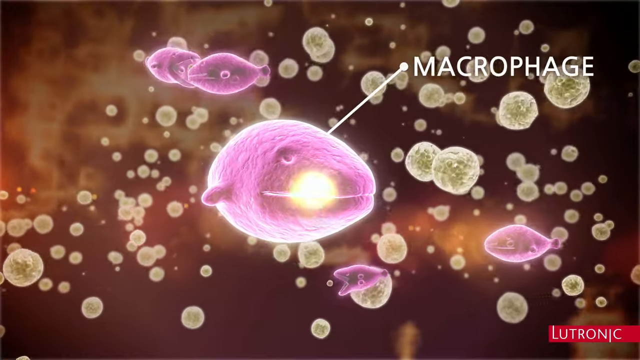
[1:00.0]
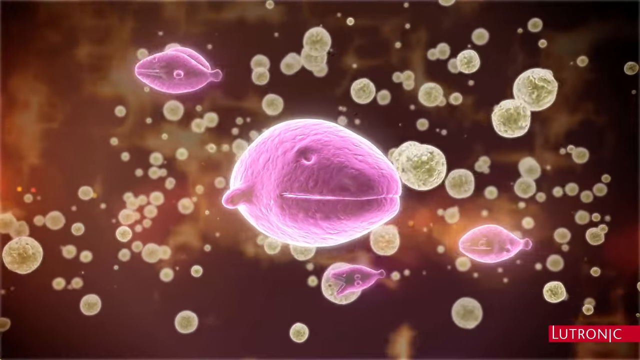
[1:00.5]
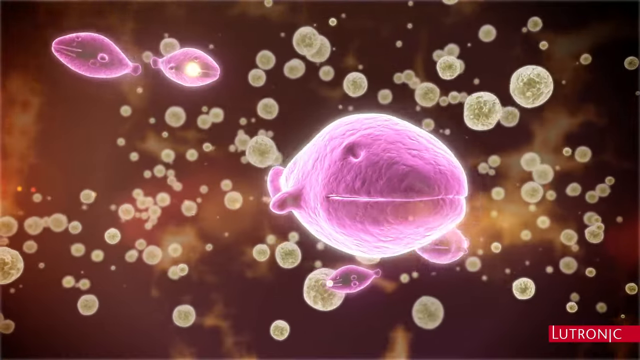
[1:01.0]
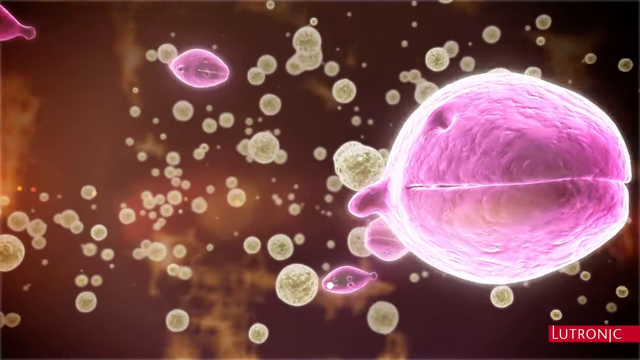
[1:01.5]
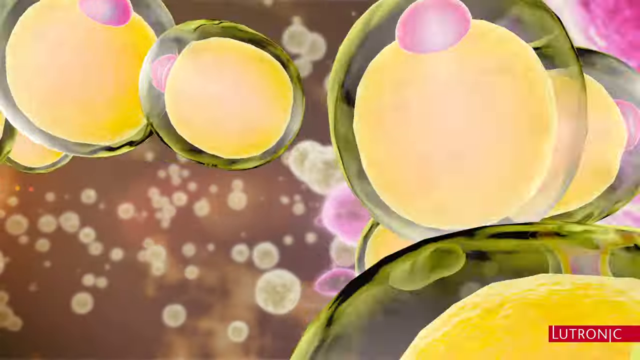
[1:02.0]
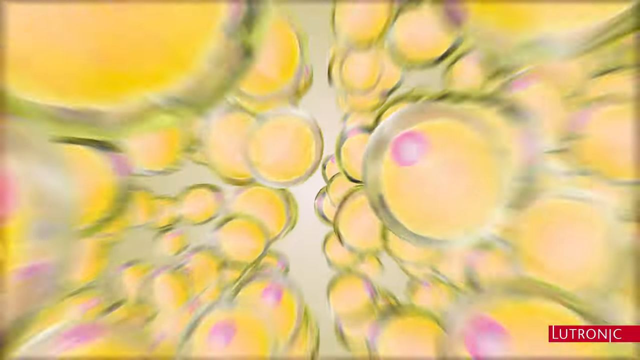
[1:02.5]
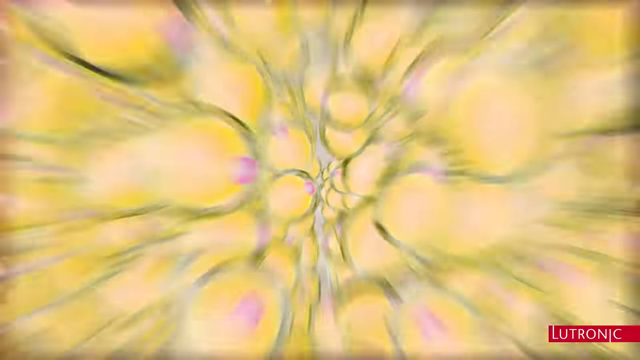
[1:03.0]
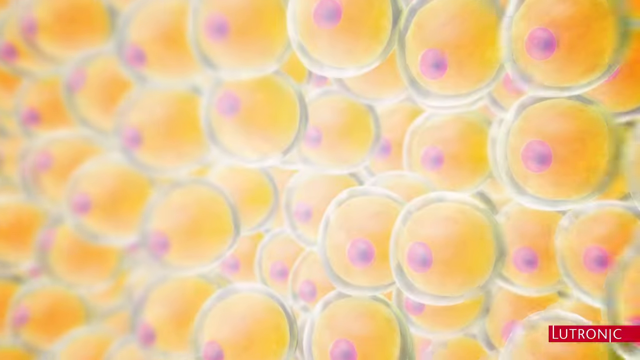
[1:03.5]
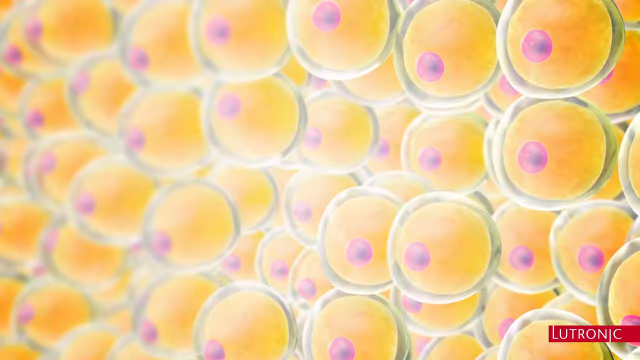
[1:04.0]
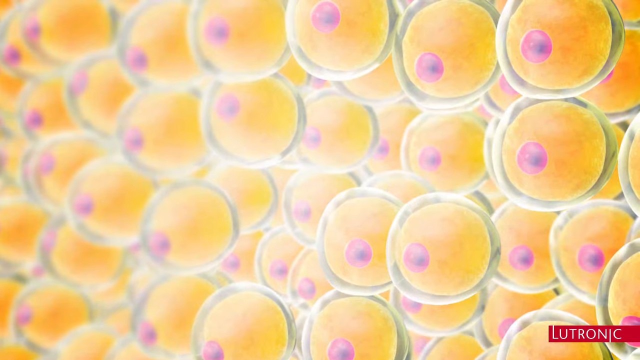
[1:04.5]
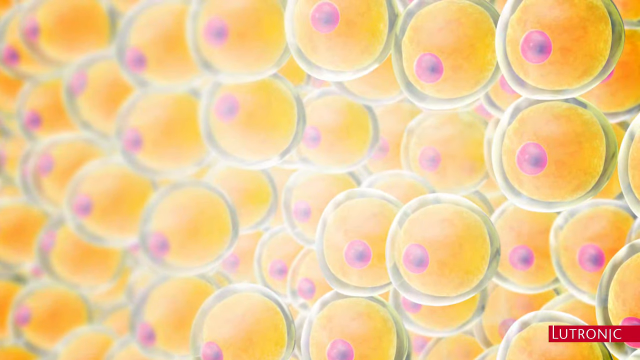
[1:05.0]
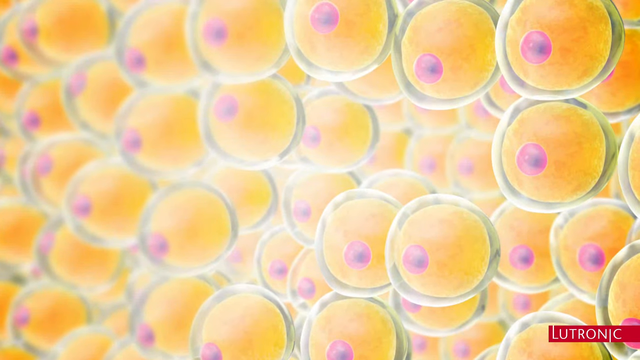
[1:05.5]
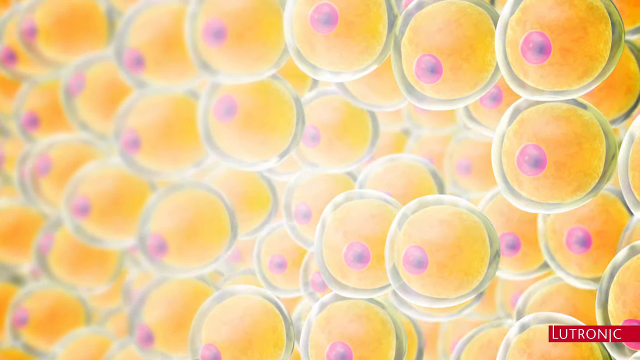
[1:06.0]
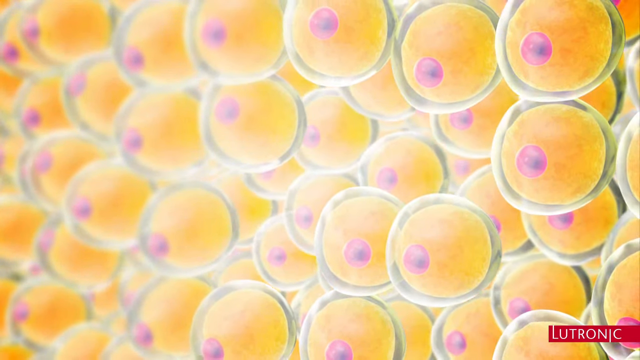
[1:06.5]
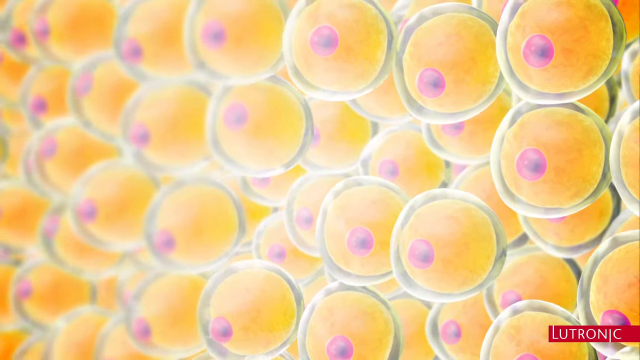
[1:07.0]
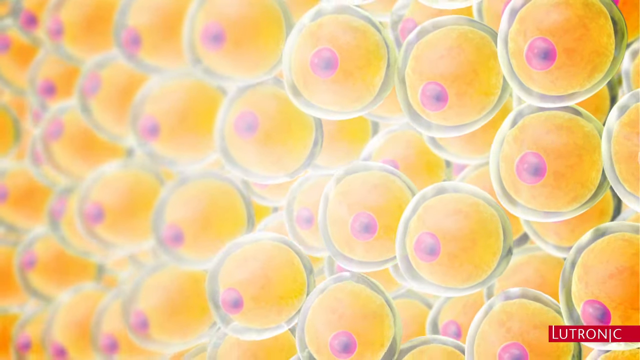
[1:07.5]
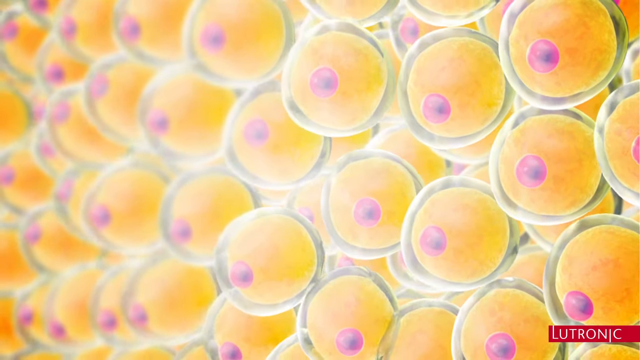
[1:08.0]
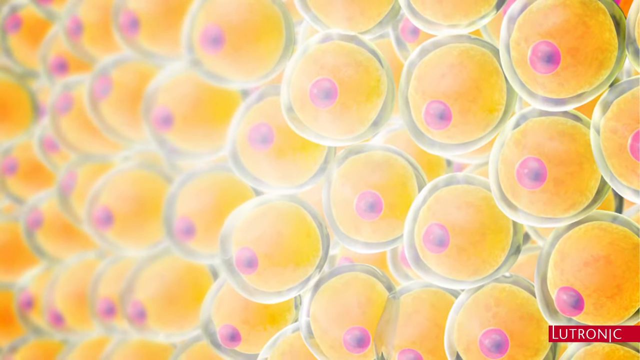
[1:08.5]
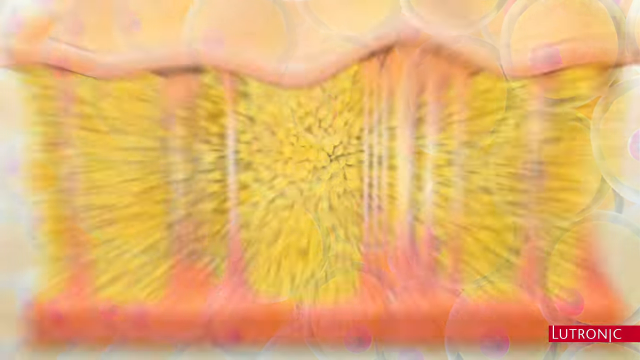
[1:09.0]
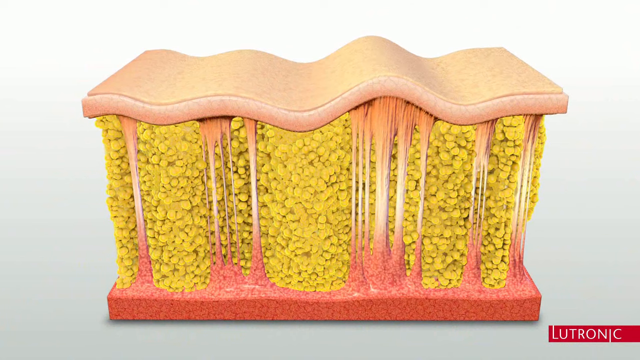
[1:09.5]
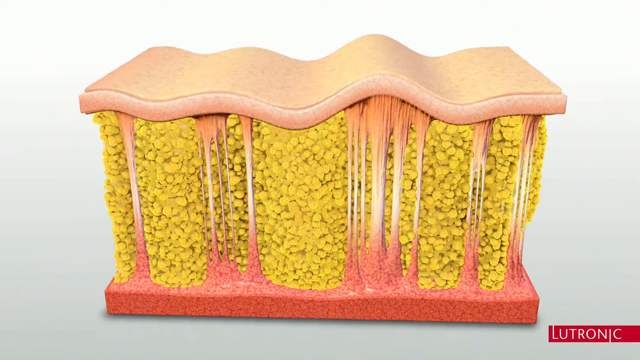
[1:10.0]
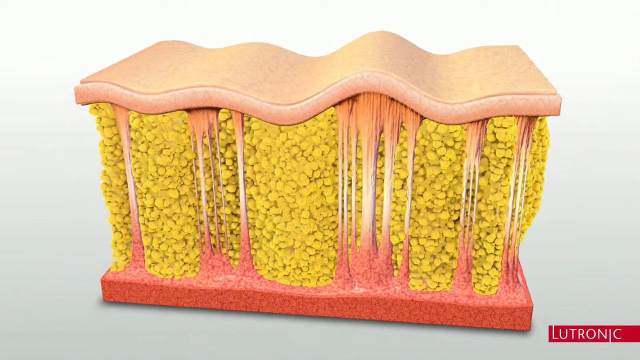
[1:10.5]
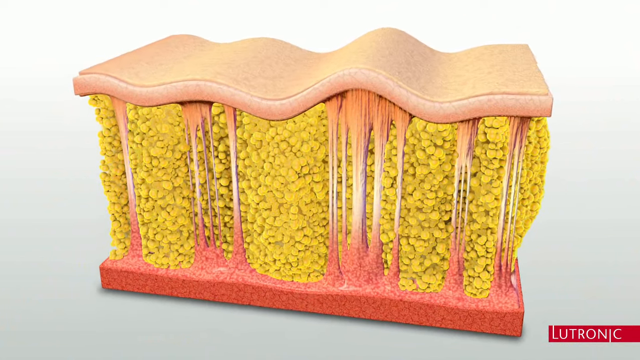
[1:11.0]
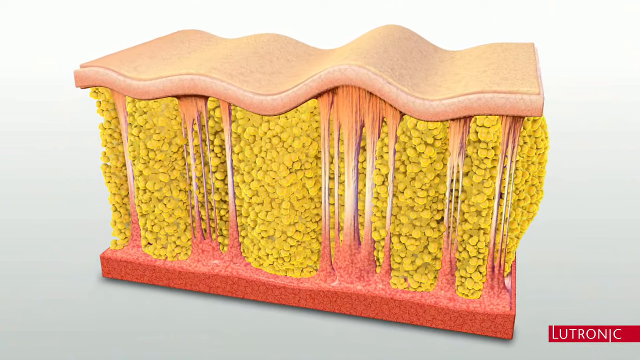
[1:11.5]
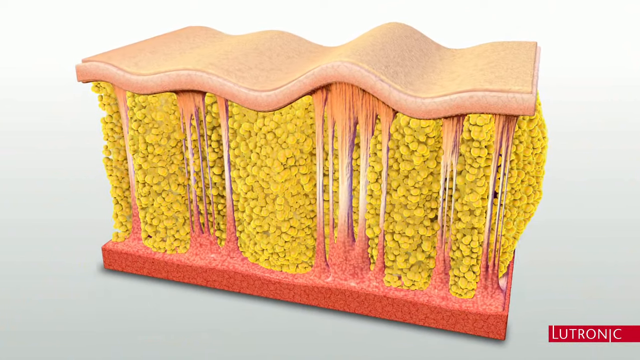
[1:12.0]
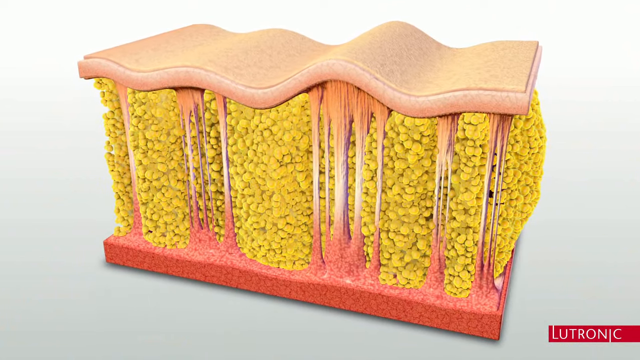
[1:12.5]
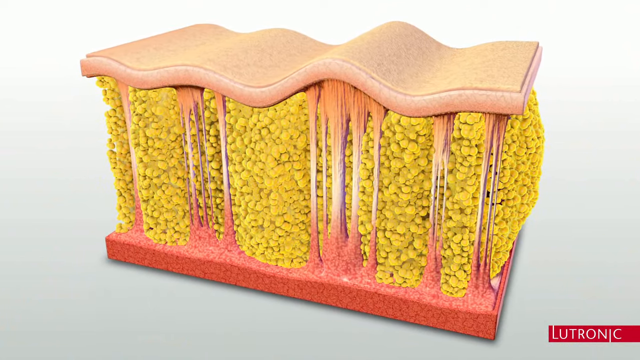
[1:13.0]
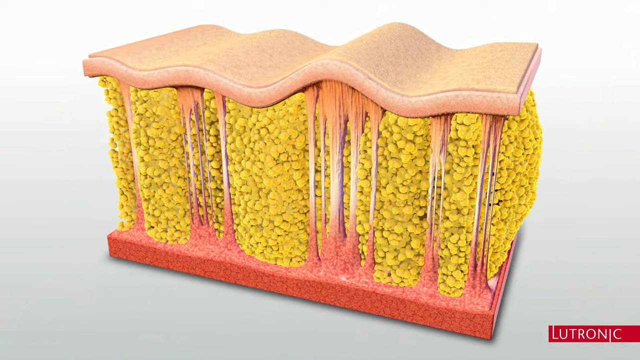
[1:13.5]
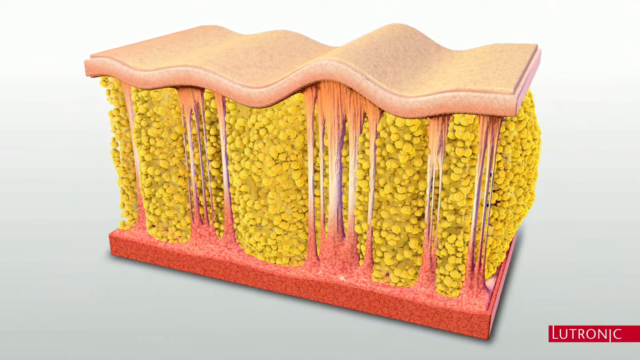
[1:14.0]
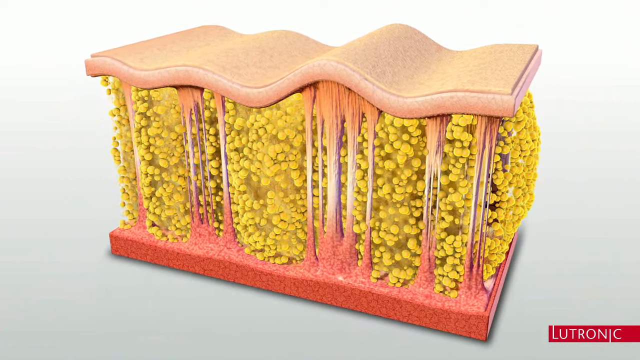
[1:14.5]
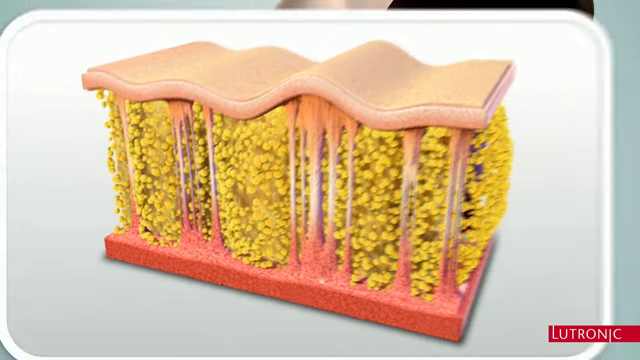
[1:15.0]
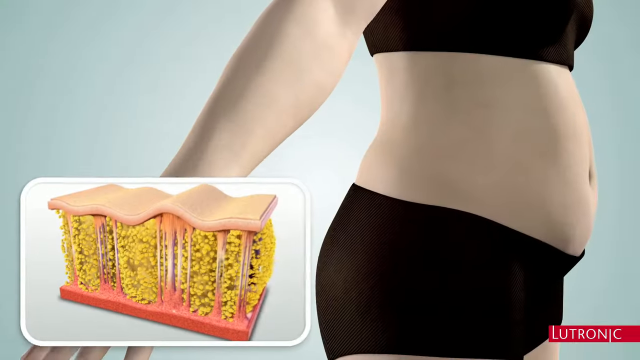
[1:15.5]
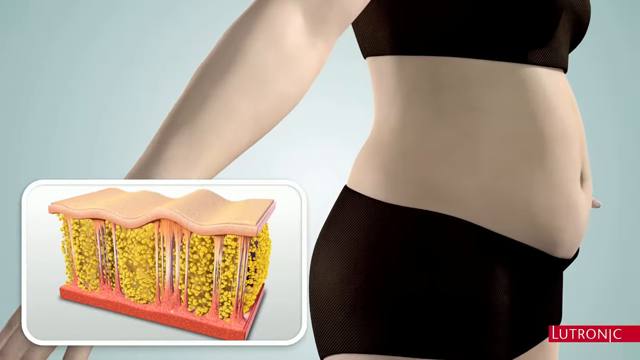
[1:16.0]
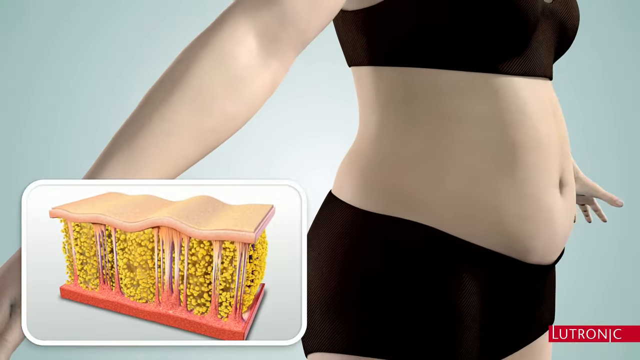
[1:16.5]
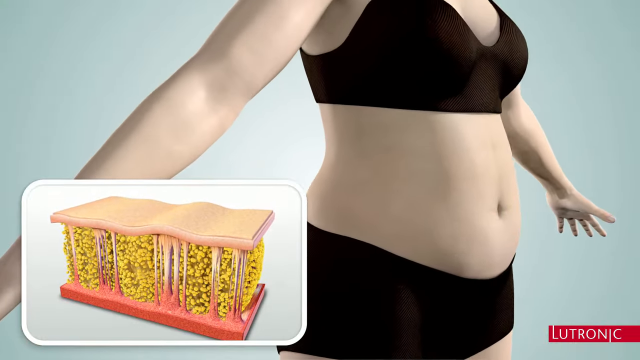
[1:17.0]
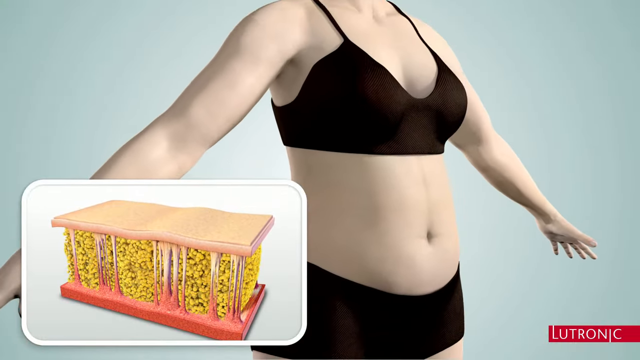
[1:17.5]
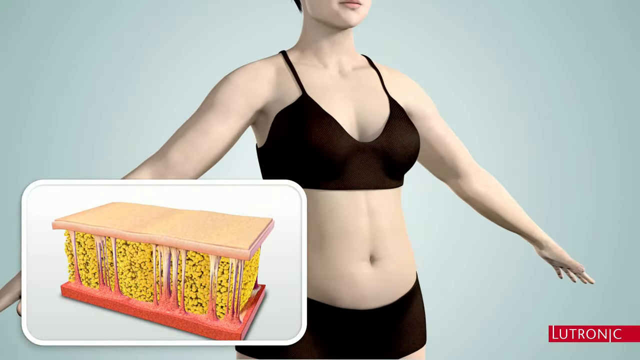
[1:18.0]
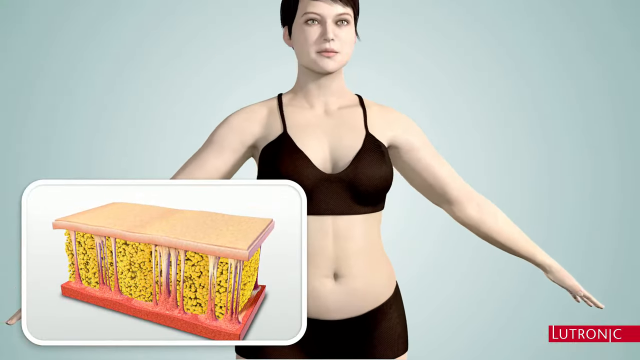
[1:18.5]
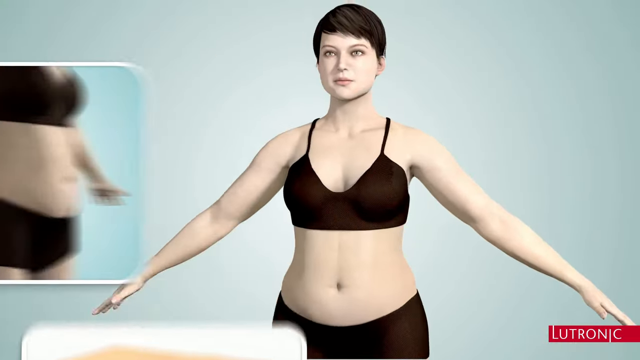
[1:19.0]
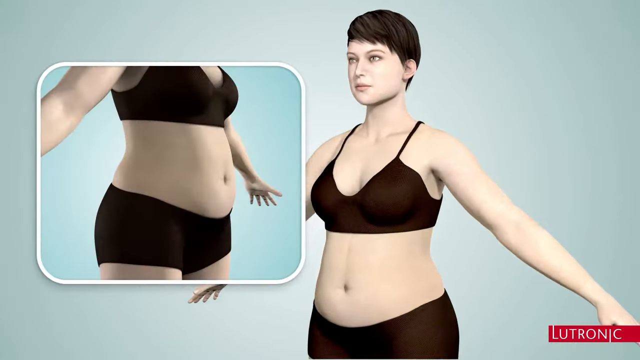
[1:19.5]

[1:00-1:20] A slide shows a model of a woman in underwear who is turned around, with her body areas shown. The focus then shifts to the adipose tissue and moves in to the cellular level on the fat cells.